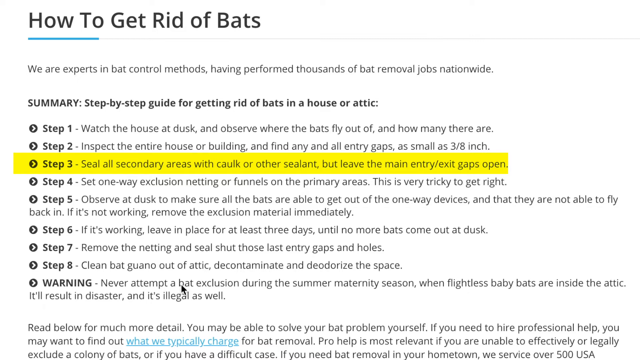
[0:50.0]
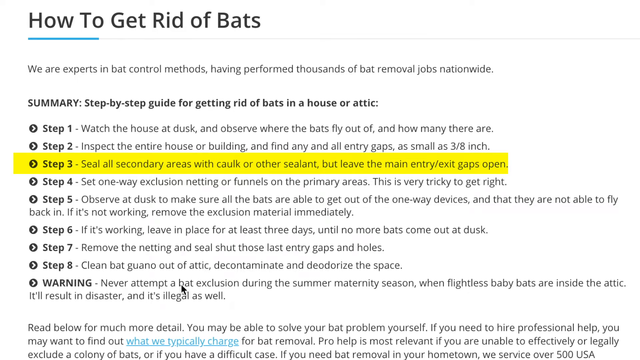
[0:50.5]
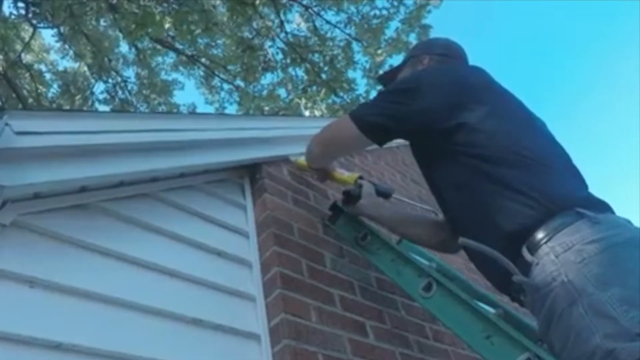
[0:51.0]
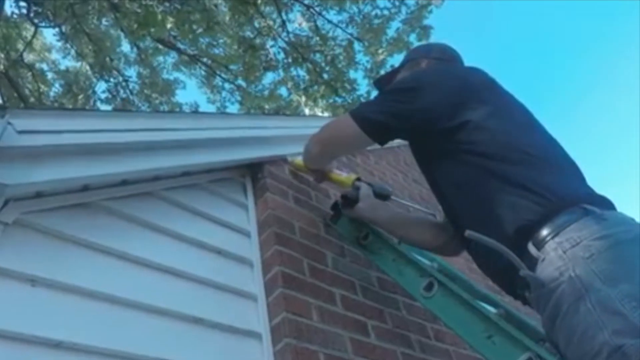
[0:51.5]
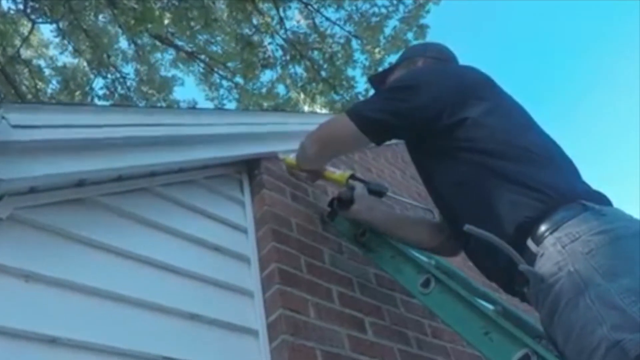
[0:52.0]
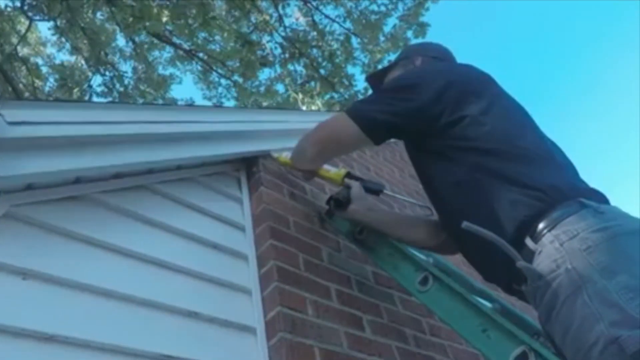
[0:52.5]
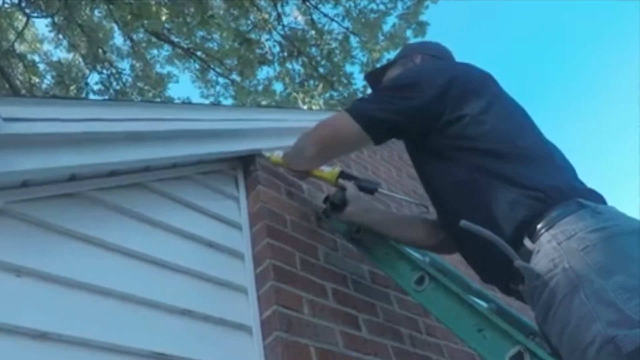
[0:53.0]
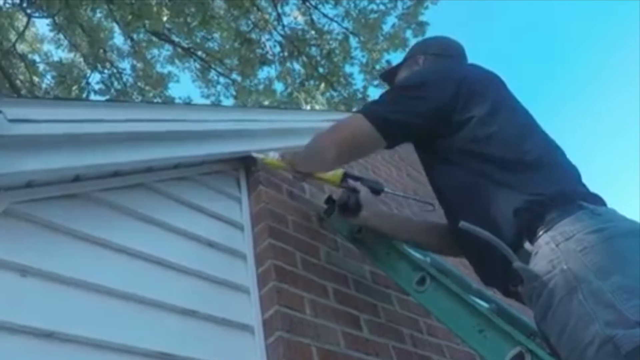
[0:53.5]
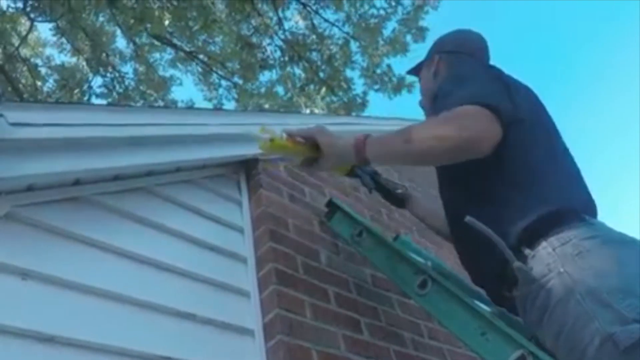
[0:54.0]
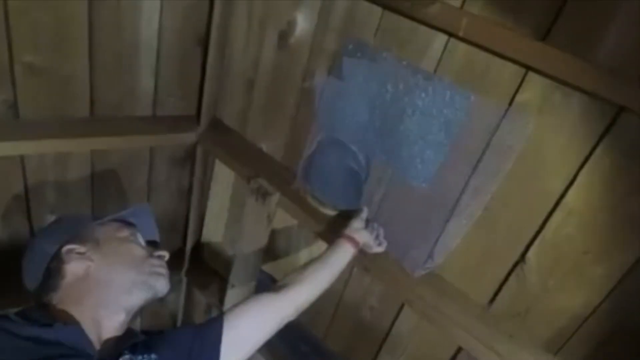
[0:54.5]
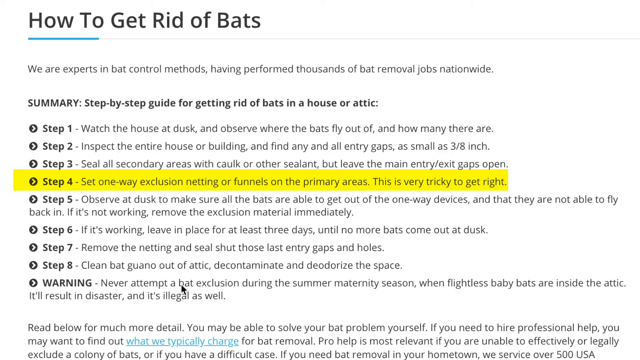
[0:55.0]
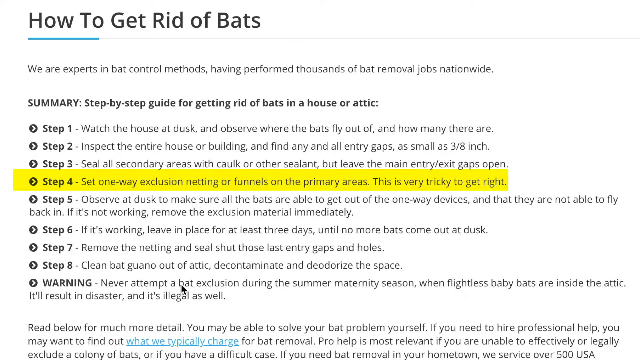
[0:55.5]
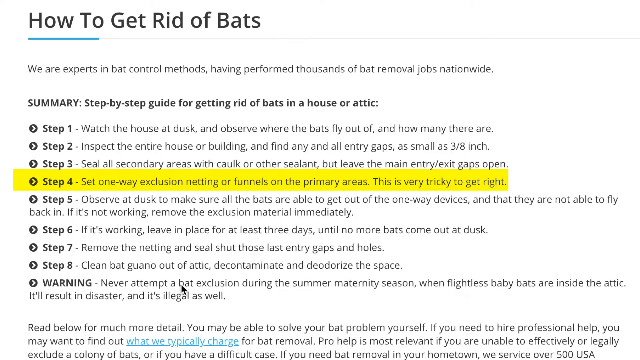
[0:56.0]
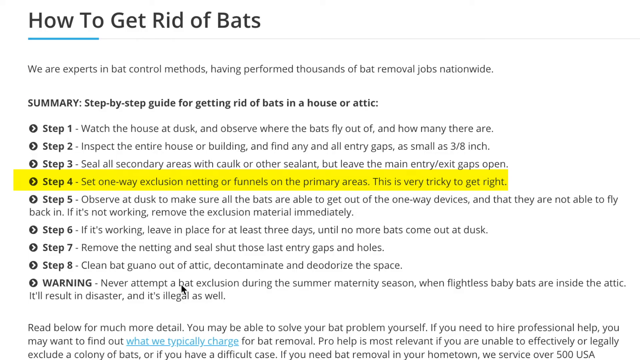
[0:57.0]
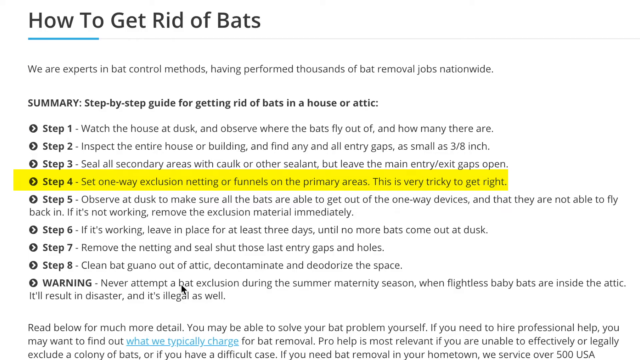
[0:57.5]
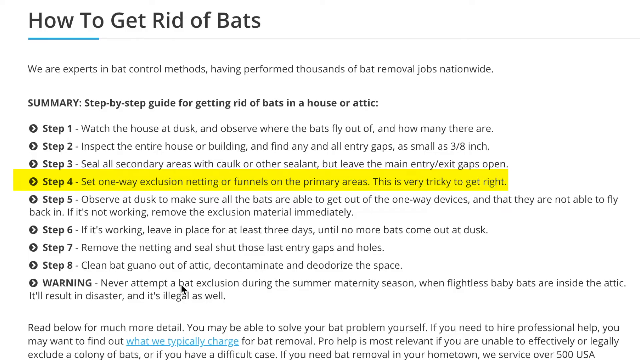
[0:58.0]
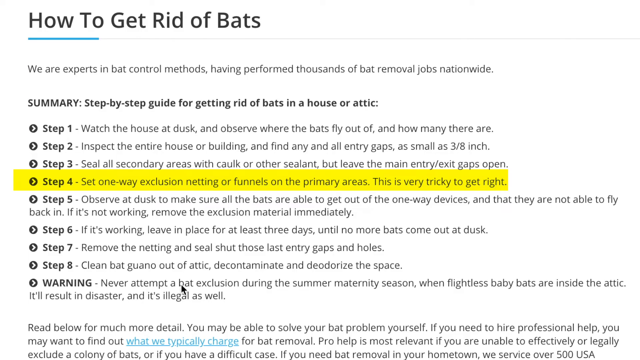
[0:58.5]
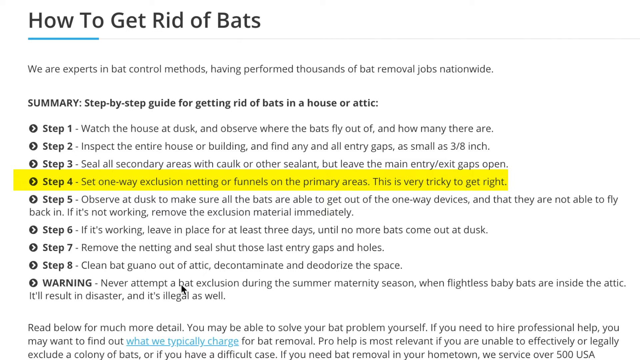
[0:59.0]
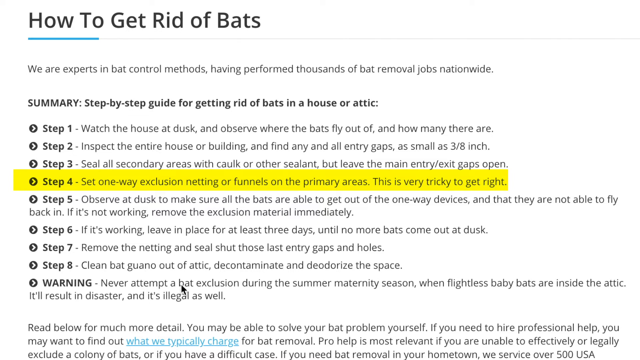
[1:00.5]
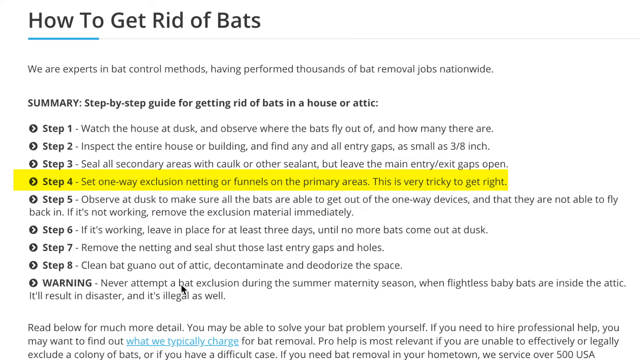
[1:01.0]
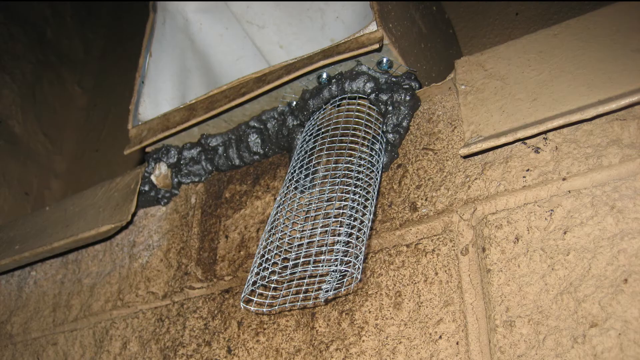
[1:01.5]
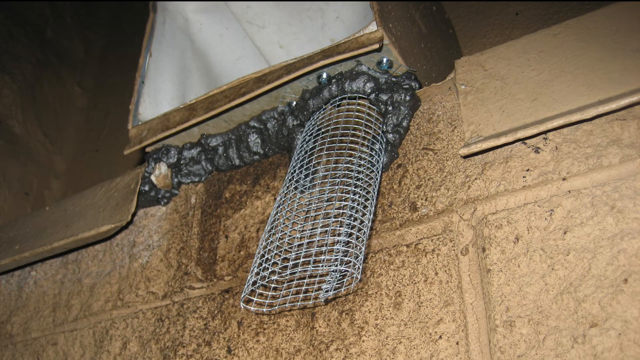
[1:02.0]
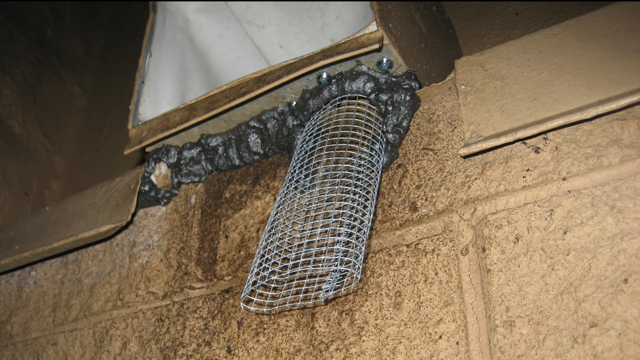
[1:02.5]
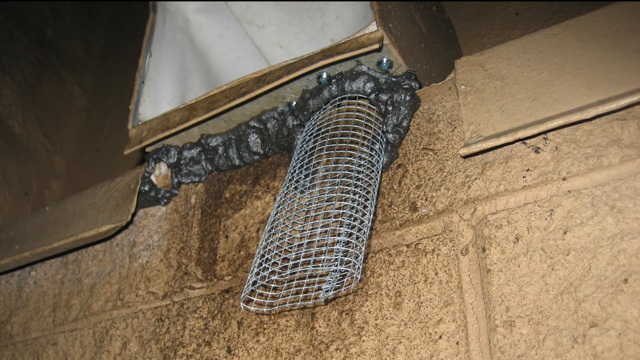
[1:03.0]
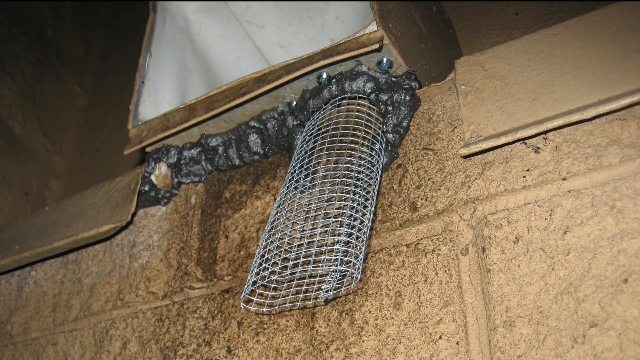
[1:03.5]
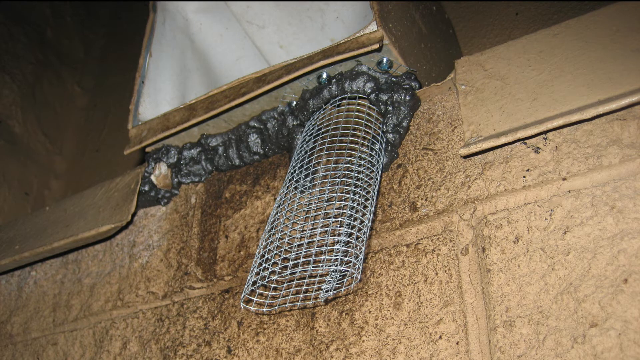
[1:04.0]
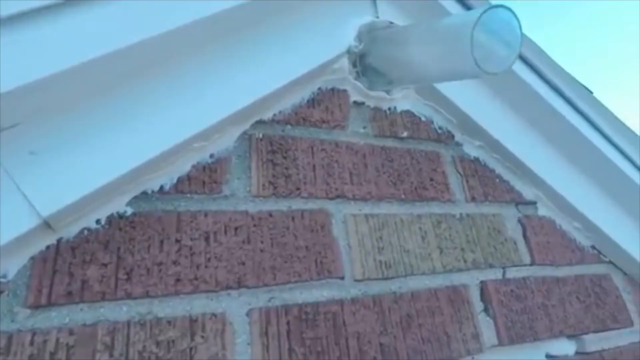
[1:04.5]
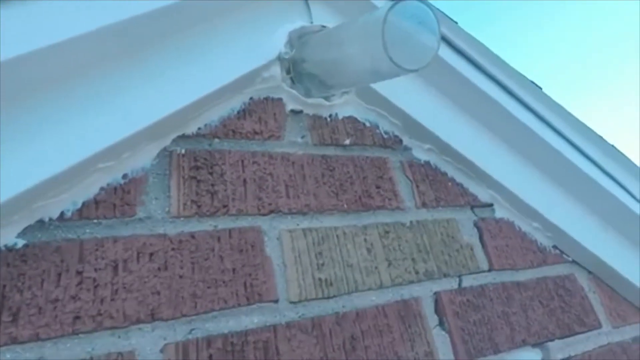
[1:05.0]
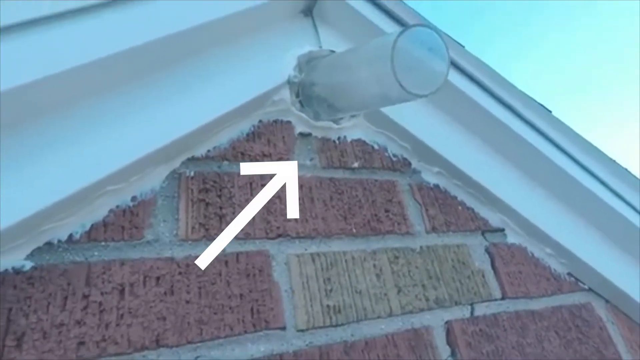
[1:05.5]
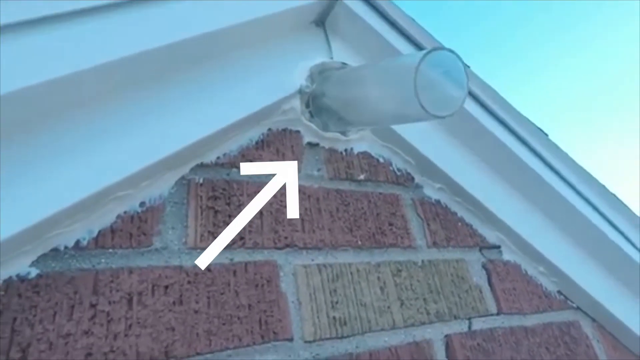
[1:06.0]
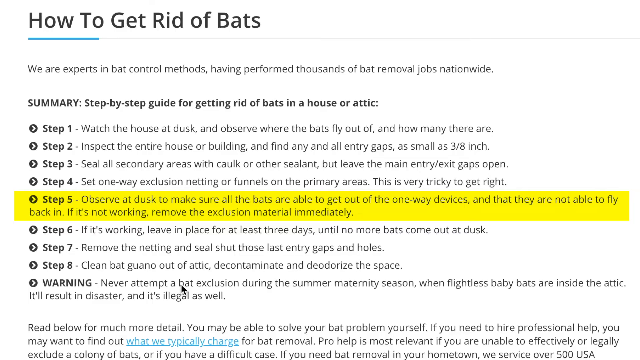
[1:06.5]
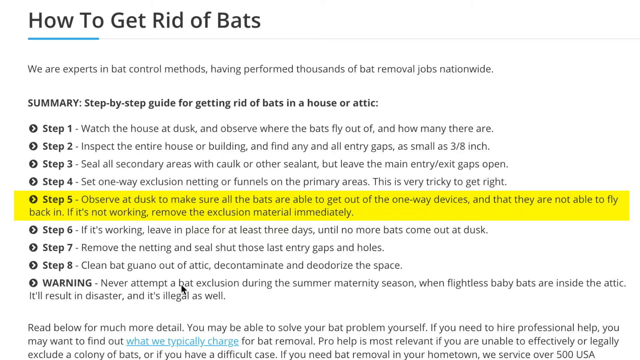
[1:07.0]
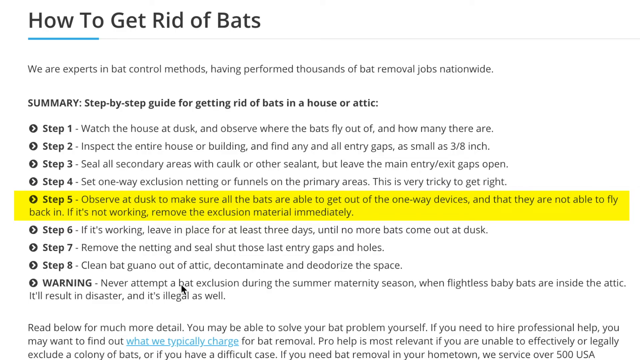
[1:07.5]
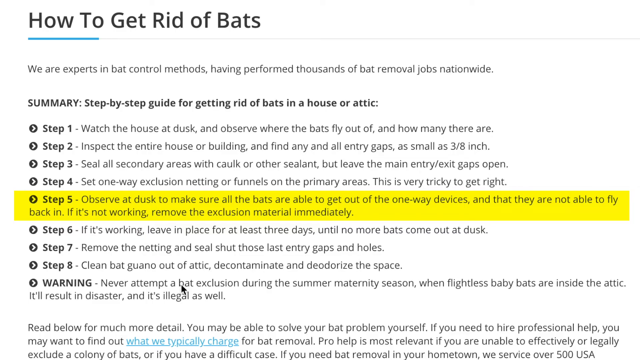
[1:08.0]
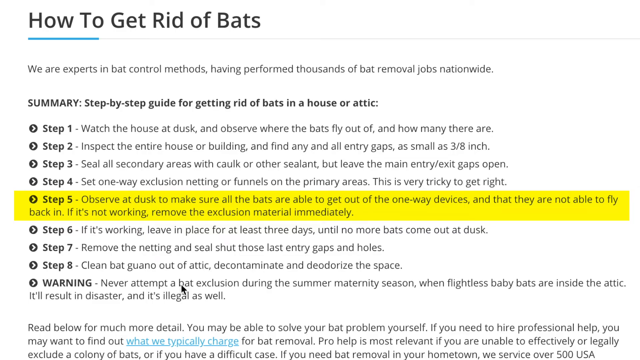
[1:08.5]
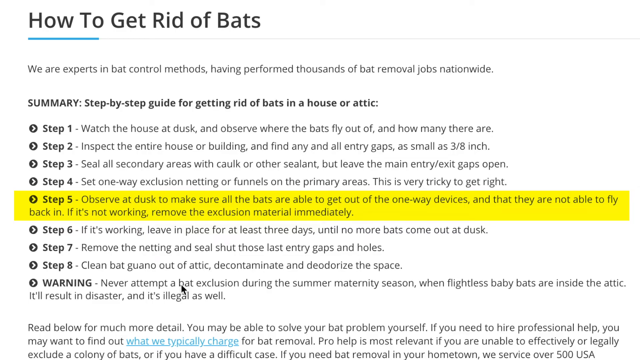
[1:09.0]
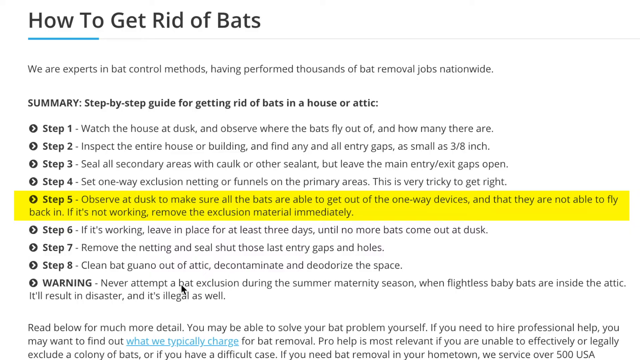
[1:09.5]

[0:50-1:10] The removal steps continue with number three: sealing all the areas that need to be sealed to prevent the critters from getting in. A man up on a ladder holds a hand sealer, like a tube, and applies it to the side of the house by the chimney. Inside, a man working on sealing the area has placed some gray matter in a circle in the attic. Step four is to set one-way exclusion netting or funnels on the primary areas, noted as very tricky to get right; the steps are highlighted to show which step the presentation is on. Some netting and a tube appear, and it looks like a tunnel is being built for the bats to leave the inside of the attic. Another is on the outside of the house: a thick, translucent plastic tube comes right out of the top of the house where the highest part of the roof intersects. Step five is observing at dusk to make sure the bats are able to get through the one-way devices.